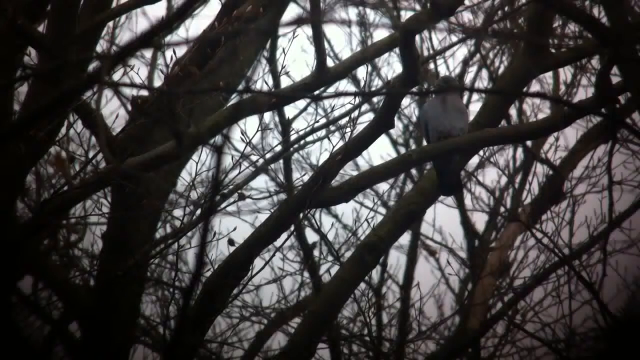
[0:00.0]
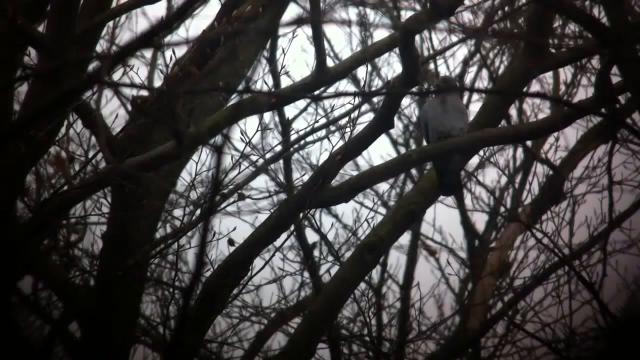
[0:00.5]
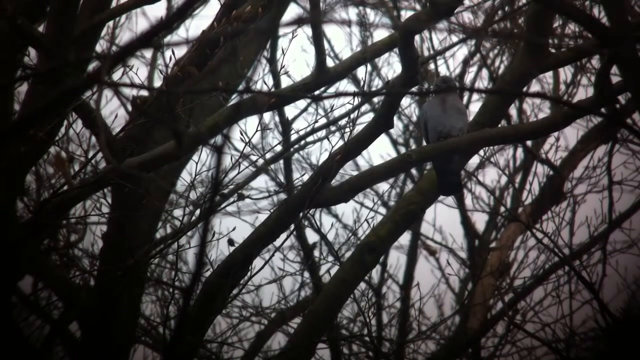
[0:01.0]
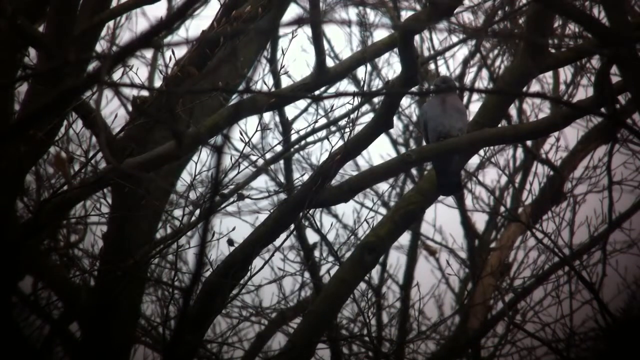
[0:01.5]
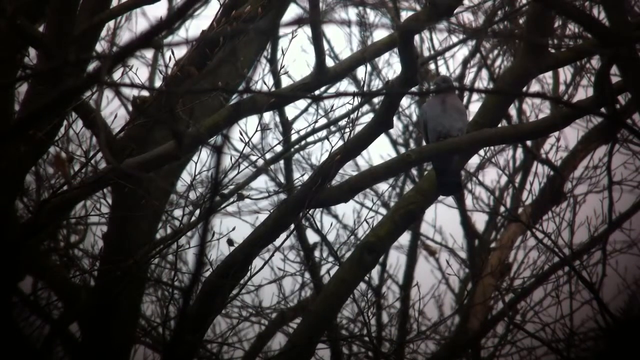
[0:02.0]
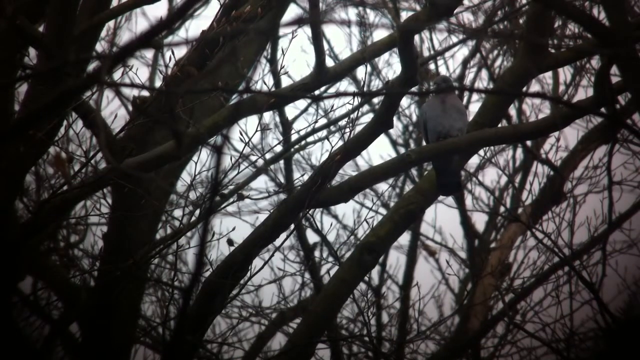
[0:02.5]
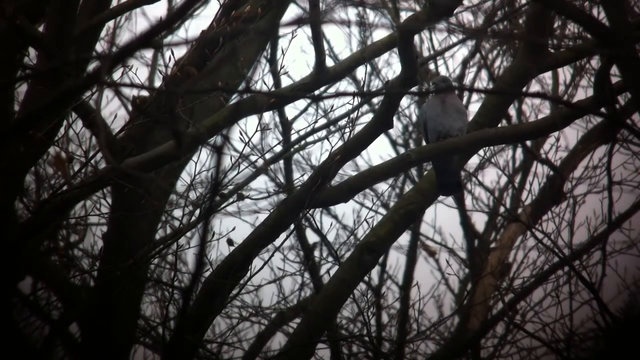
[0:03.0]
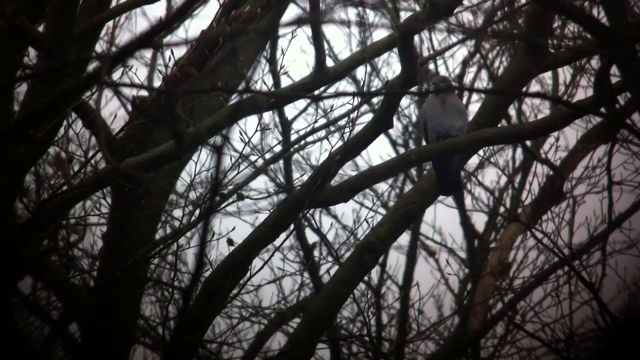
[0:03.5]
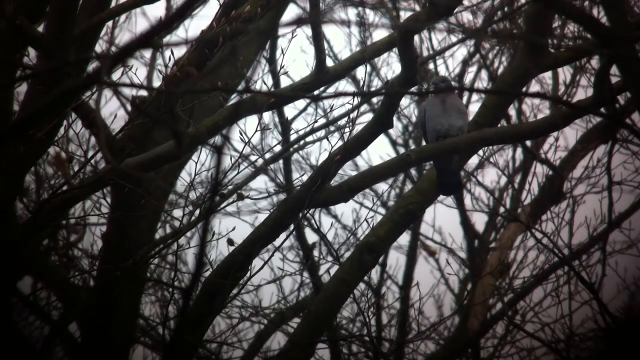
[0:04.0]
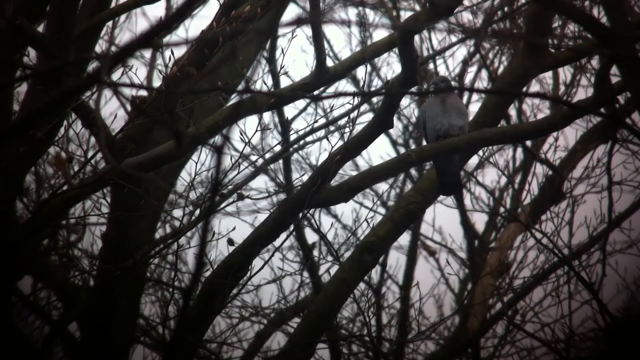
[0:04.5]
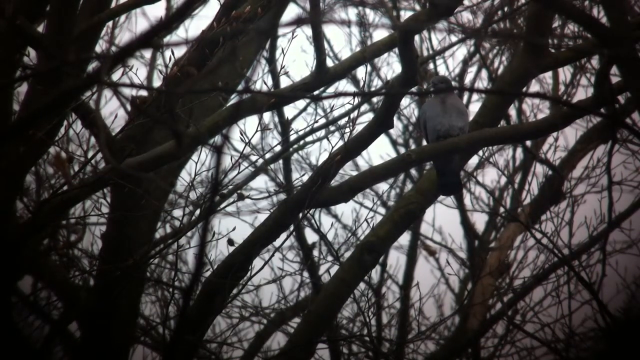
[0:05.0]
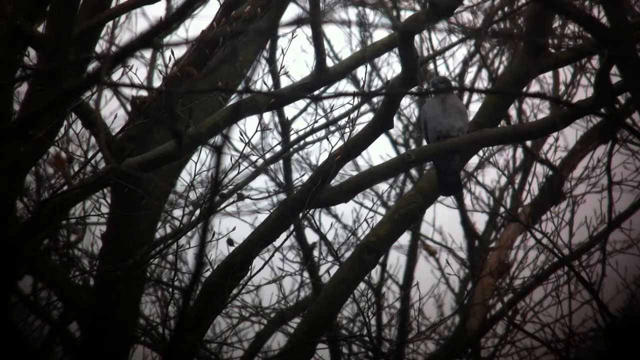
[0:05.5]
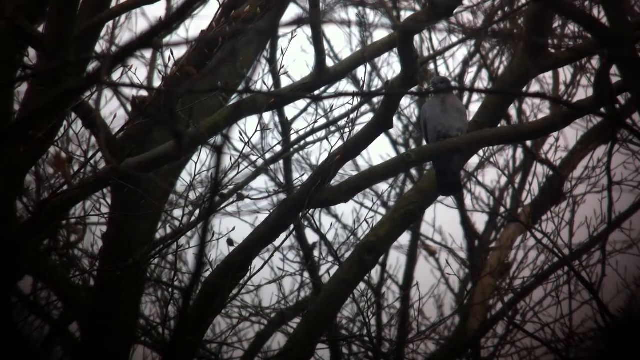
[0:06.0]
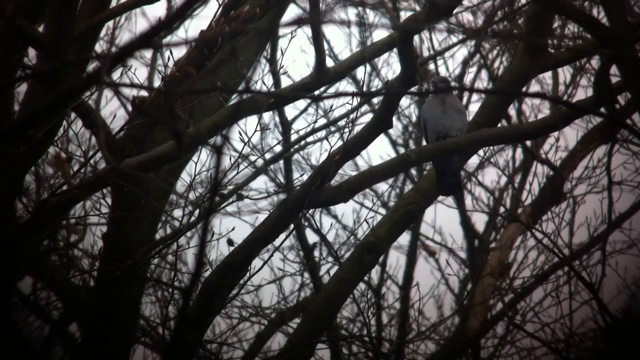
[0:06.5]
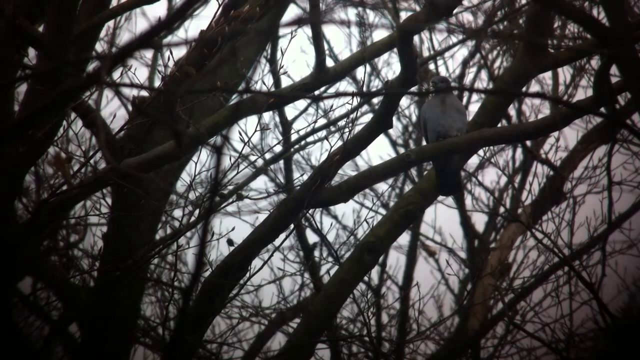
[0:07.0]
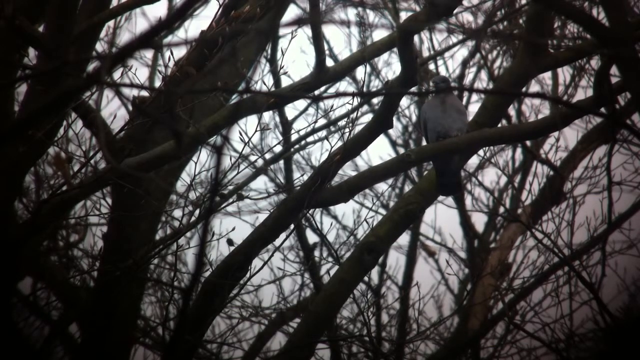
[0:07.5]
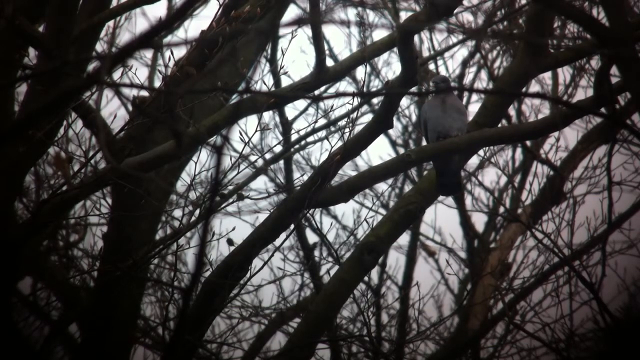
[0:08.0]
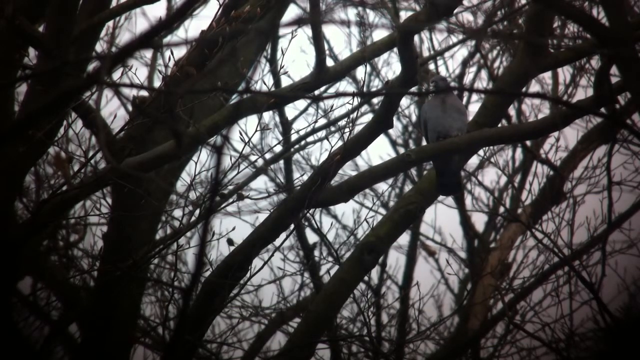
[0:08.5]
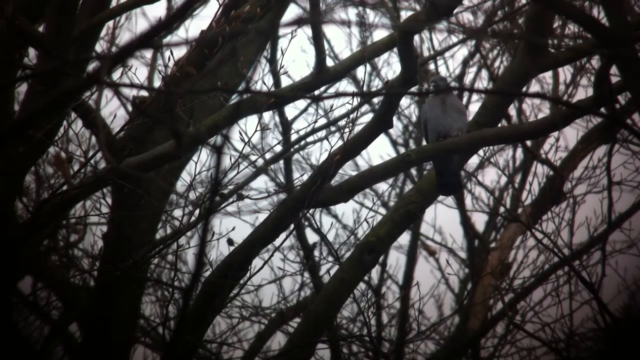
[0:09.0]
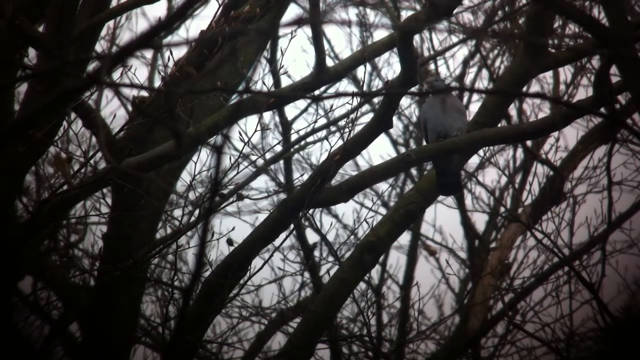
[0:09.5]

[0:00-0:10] The video opens on a very dark scene. It looks like someone is filming among a bunch of trees, apparently in a forested area of some sort. It appears to be winter or some cold time of year, since there are hardly any leaves on the trees, and the scene looks very dark, muggy and somewhat foggy. What looks like a bird or an owl is sitting on one of the trees, just hanging out and watching over the place.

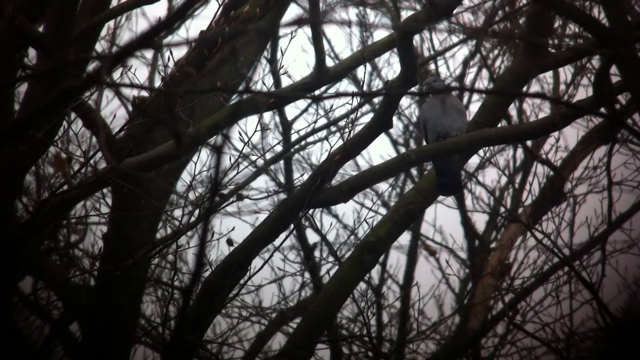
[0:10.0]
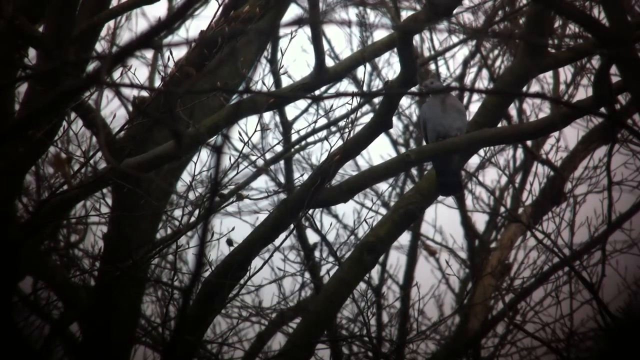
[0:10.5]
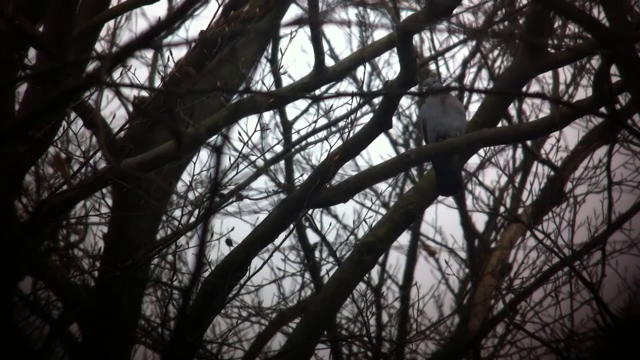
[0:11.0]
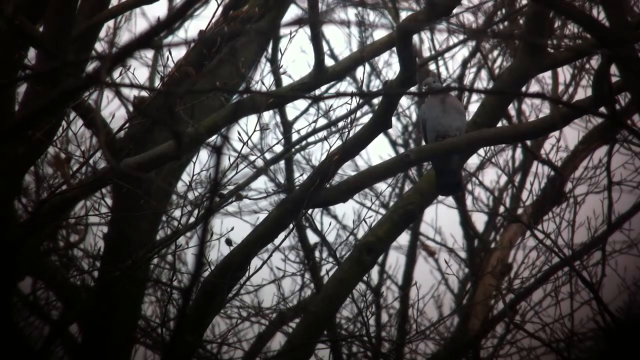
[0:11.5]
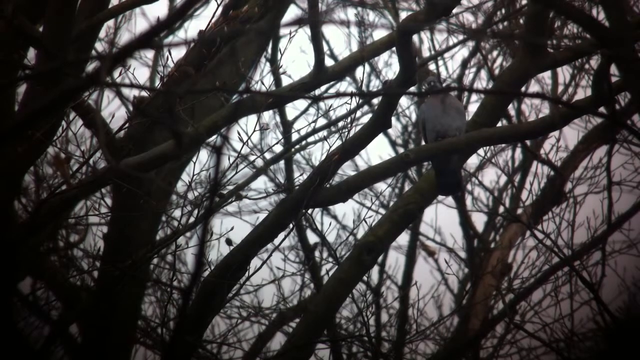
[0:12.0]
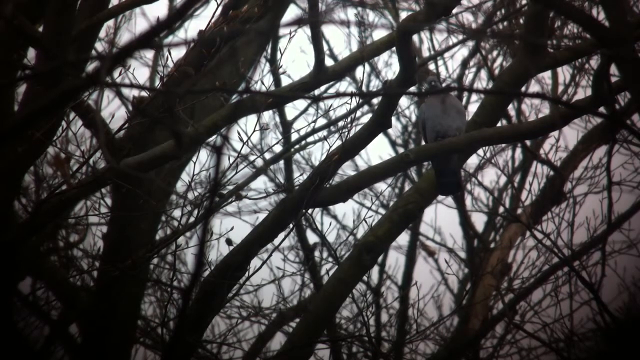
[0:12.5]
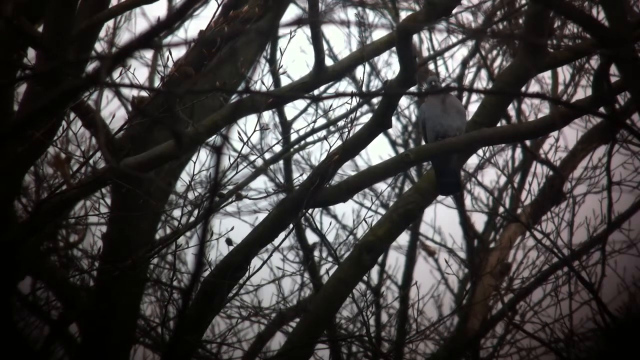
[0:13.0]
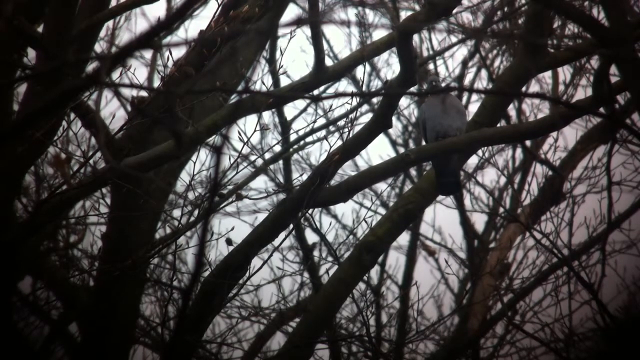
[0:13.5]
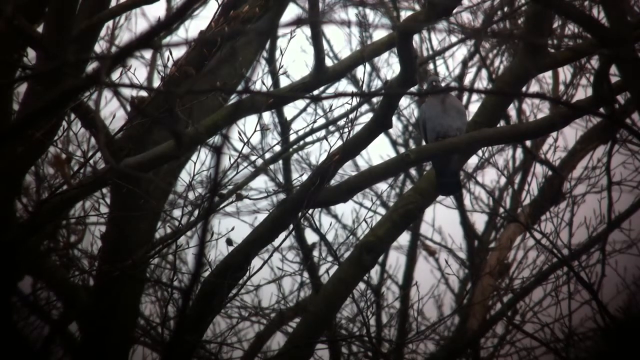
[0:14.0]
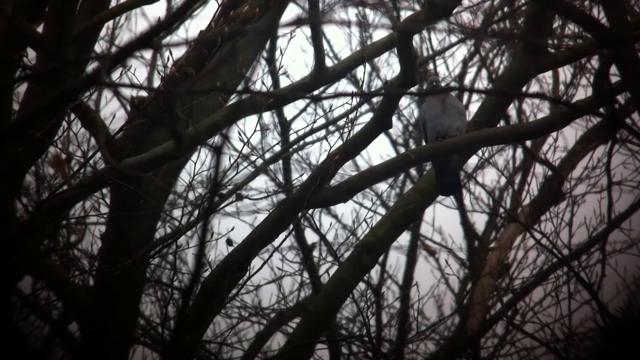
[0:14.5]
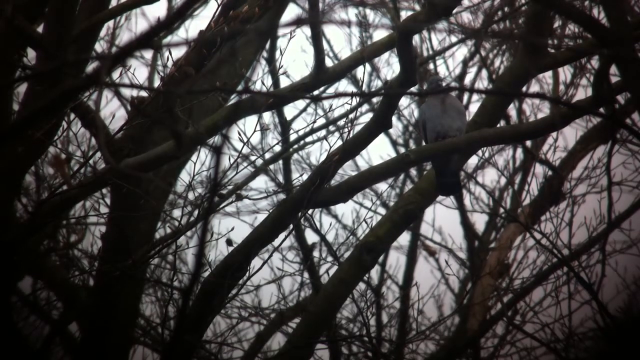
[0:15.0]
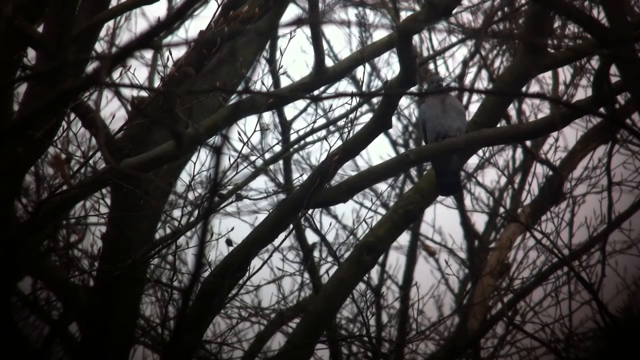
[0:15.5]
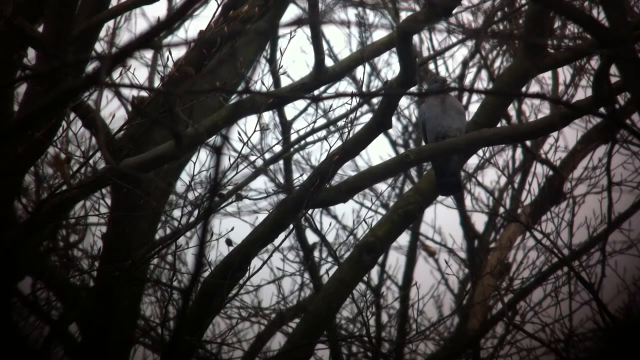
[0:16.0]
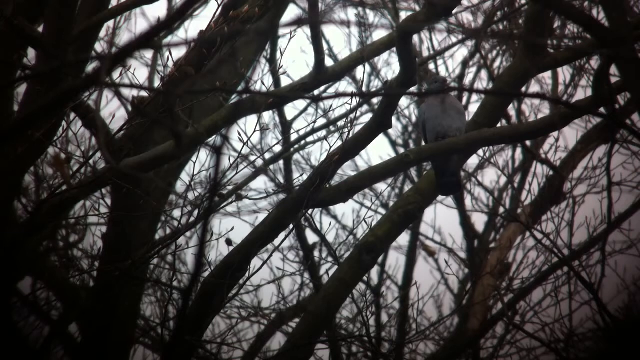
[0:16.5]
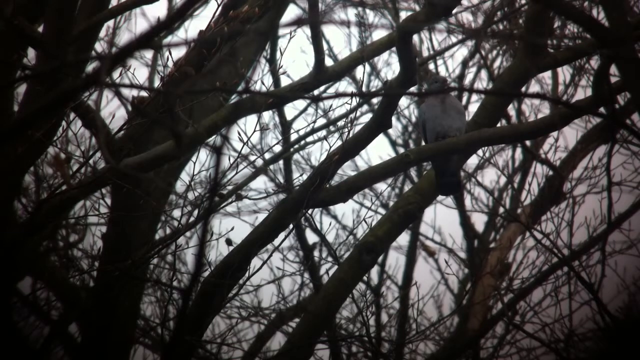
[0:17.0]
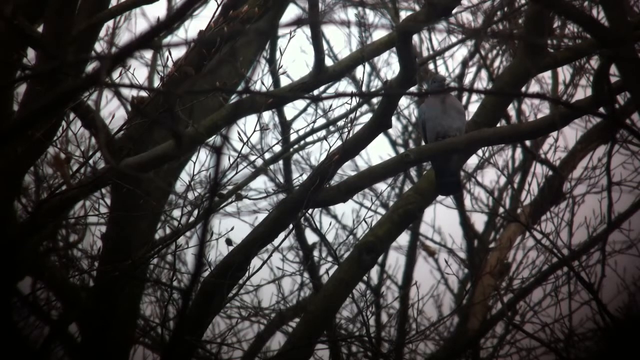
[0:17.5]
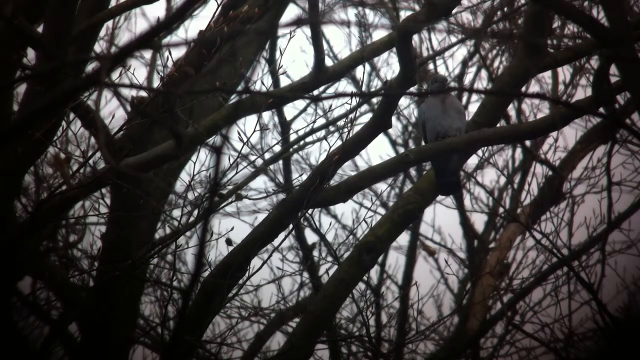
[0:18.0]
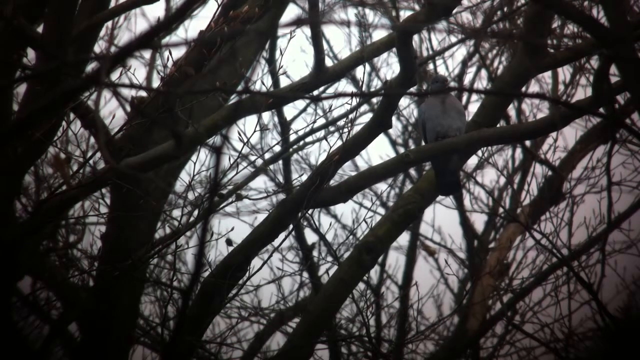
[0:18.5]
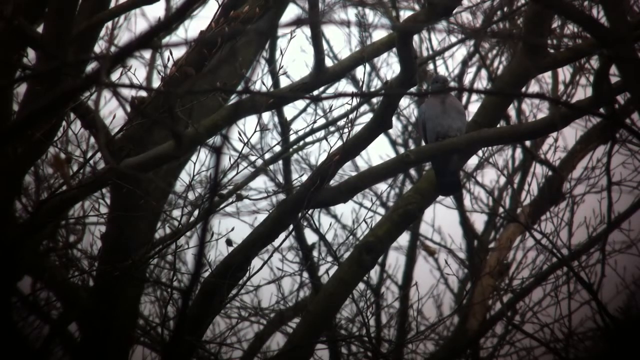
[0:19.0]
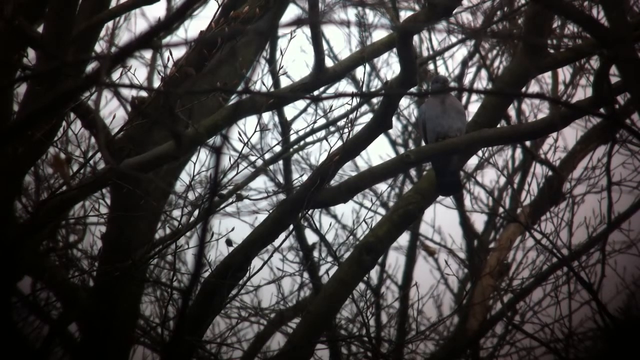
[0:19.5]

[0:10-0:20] Someone who seems to be up in the trees is still recording through a bare forest. It looks very foggy and like a very cold day outside. The same animal is still shown; it is hard to make out, but it appears to be a bird. The bird turns its head a little, looking from side to side. It looks grayish white, with dark eyes and a darker beak. Its head also looks a little darker, though that may just be shadows.